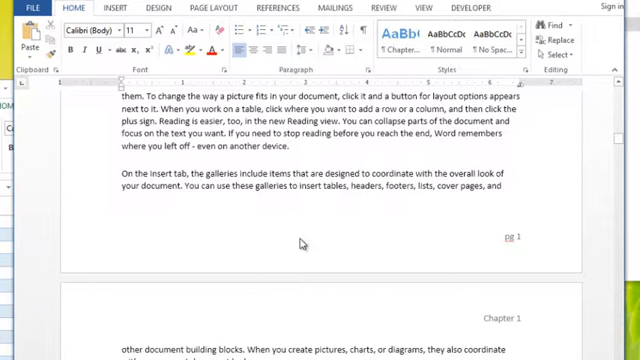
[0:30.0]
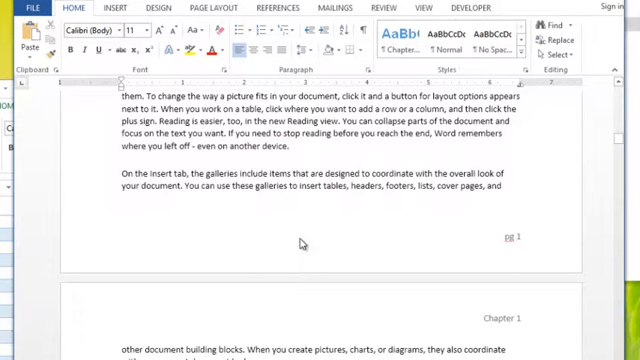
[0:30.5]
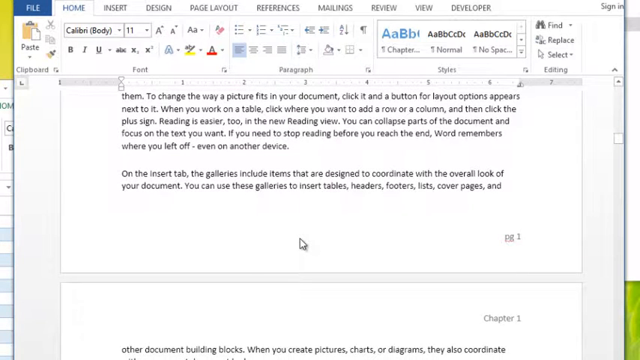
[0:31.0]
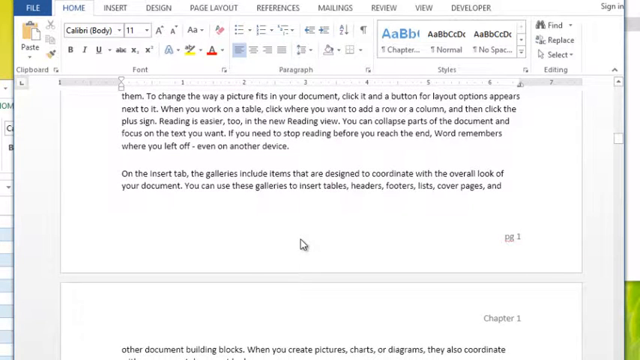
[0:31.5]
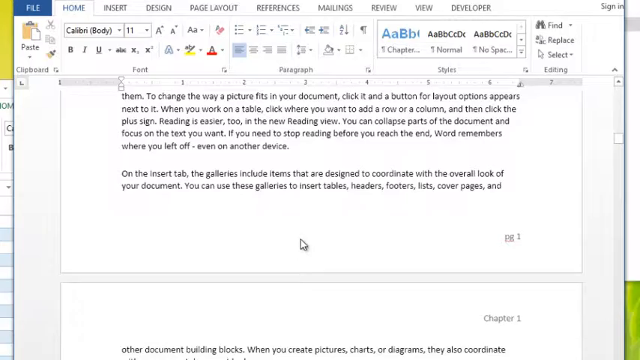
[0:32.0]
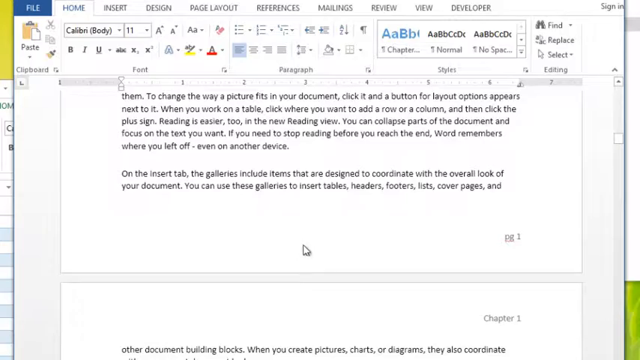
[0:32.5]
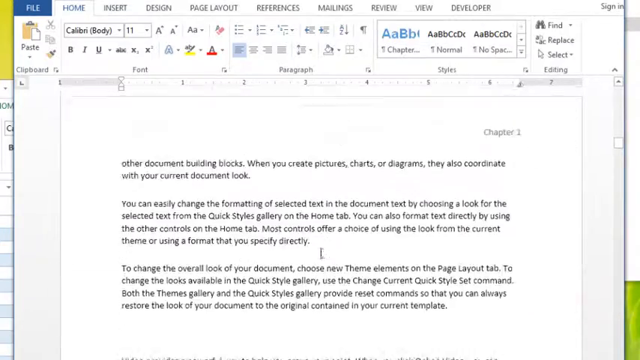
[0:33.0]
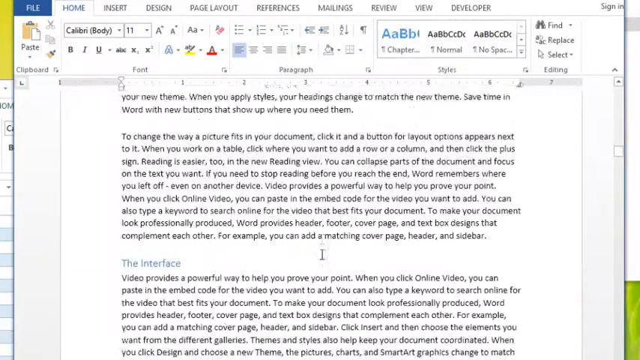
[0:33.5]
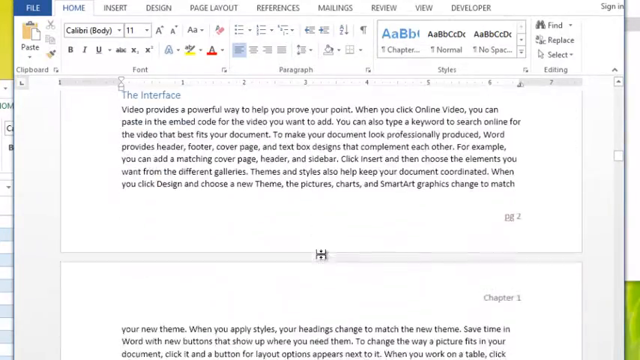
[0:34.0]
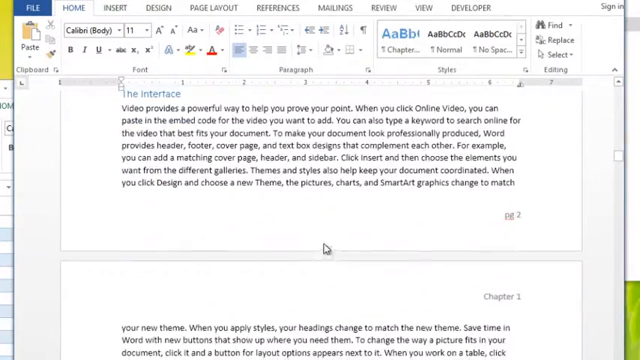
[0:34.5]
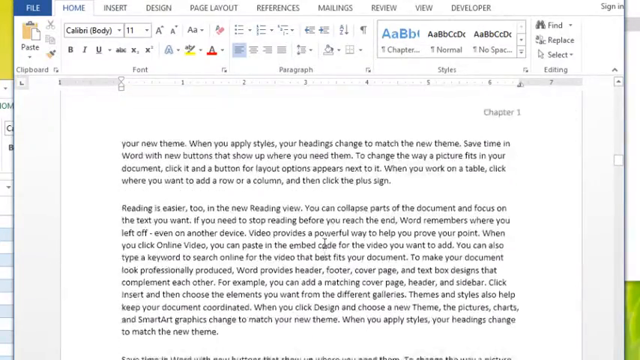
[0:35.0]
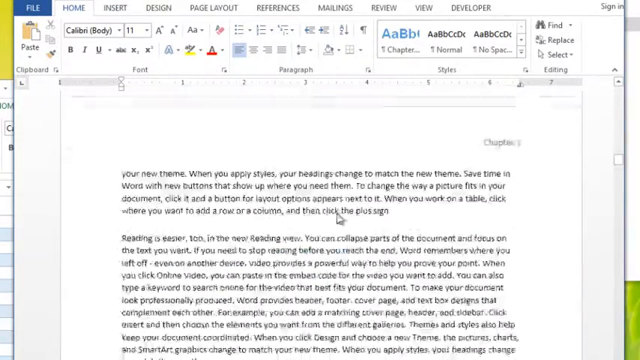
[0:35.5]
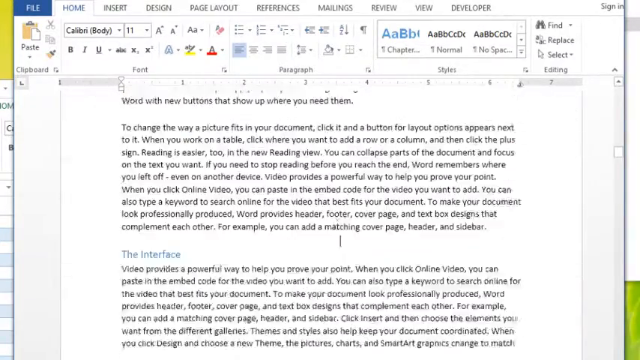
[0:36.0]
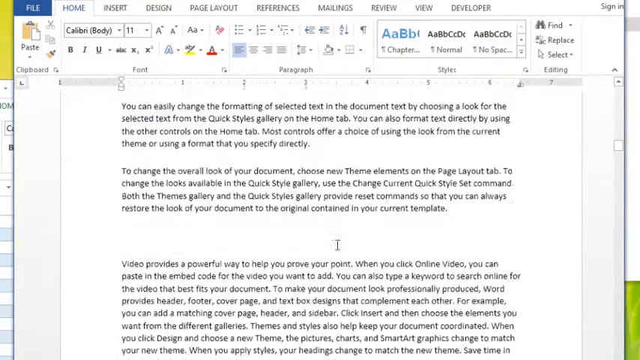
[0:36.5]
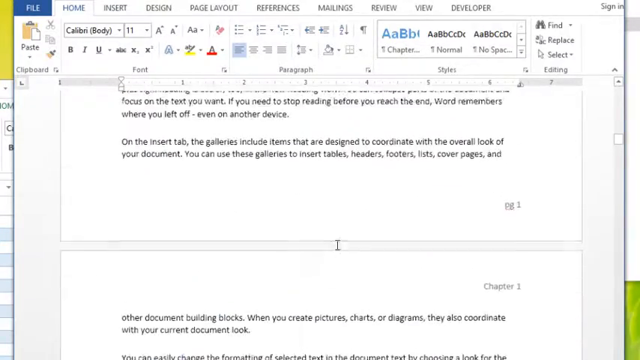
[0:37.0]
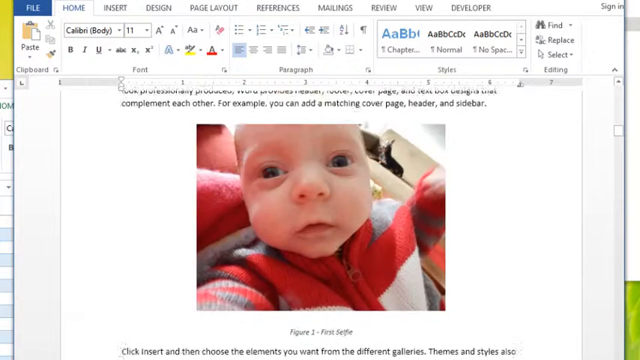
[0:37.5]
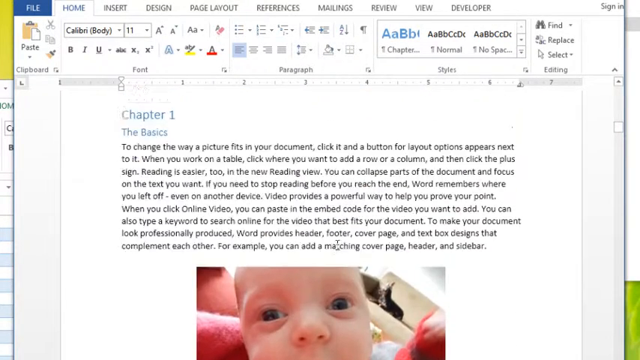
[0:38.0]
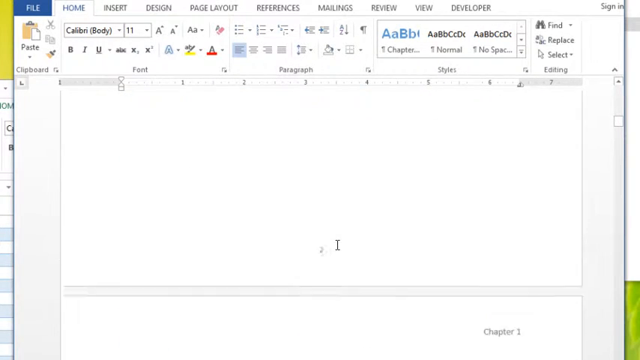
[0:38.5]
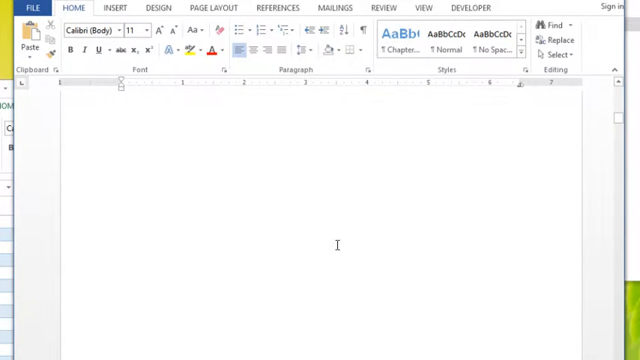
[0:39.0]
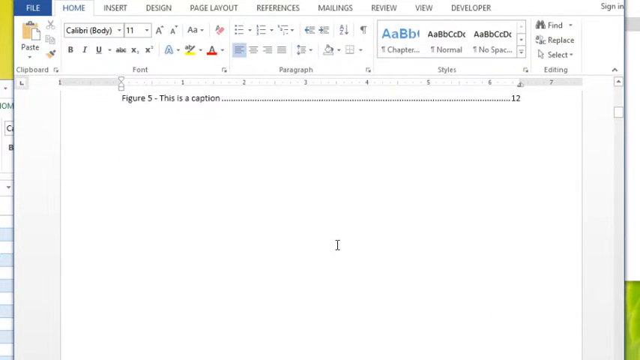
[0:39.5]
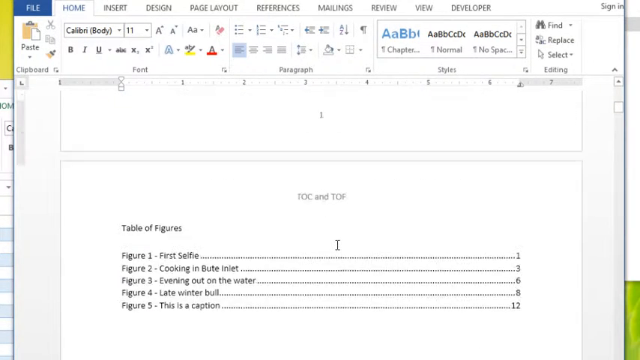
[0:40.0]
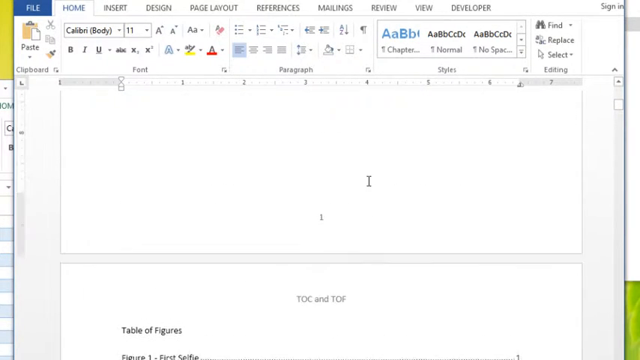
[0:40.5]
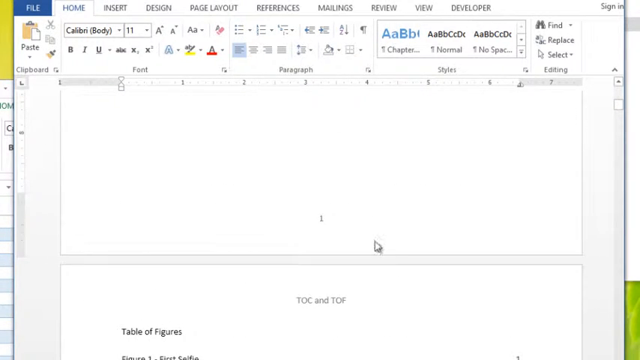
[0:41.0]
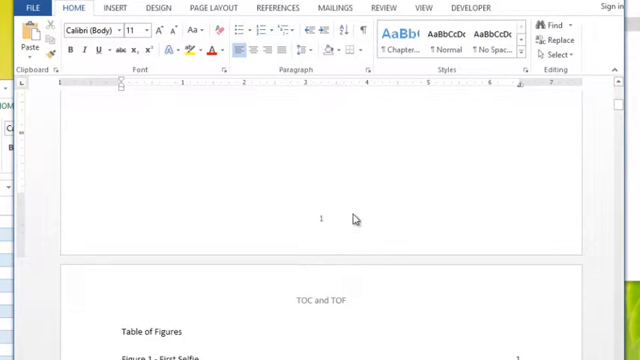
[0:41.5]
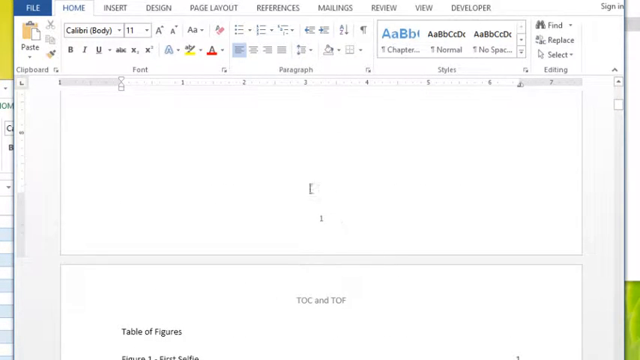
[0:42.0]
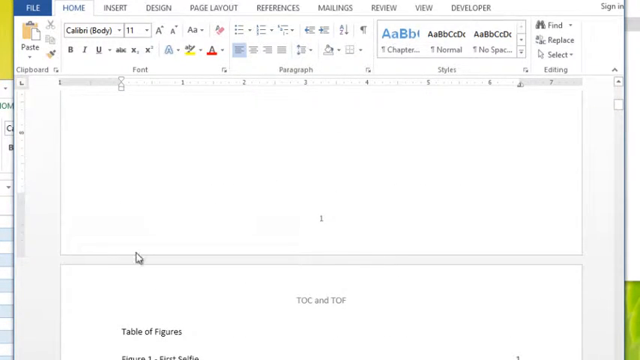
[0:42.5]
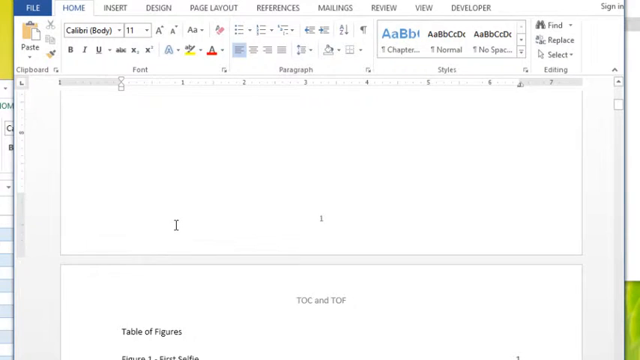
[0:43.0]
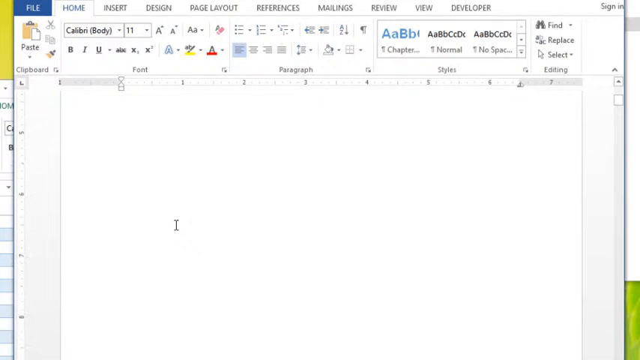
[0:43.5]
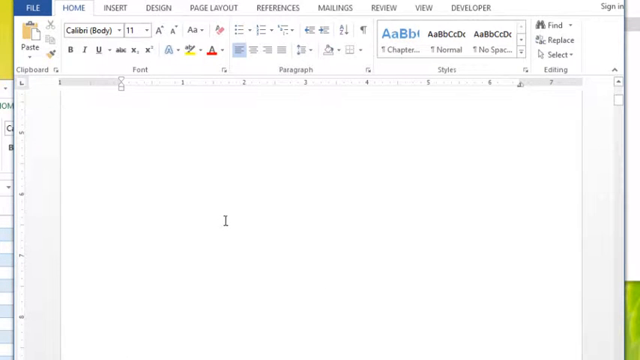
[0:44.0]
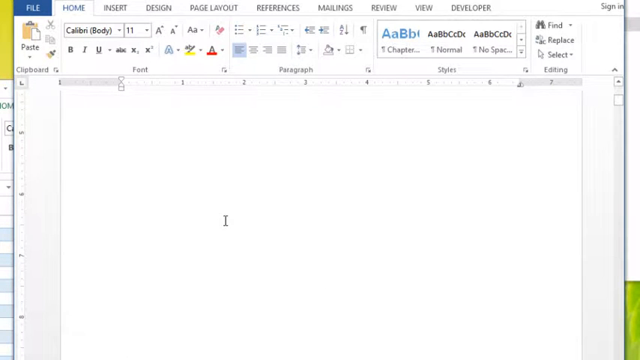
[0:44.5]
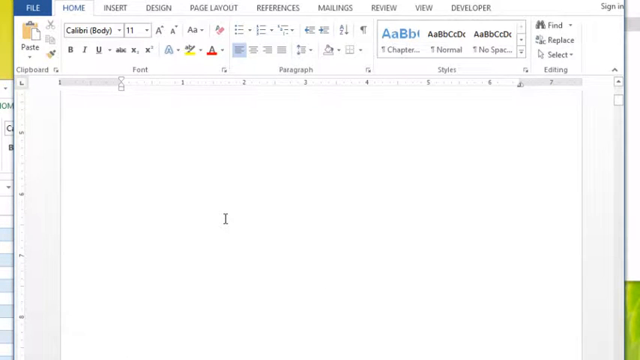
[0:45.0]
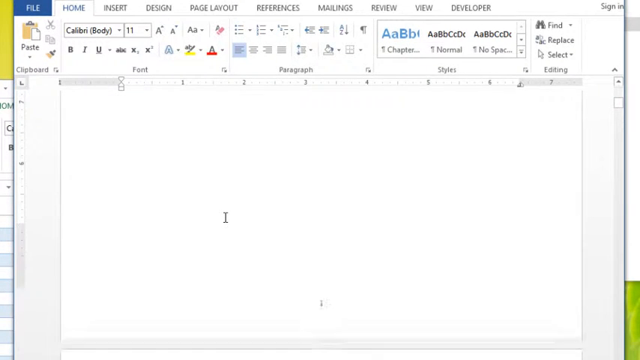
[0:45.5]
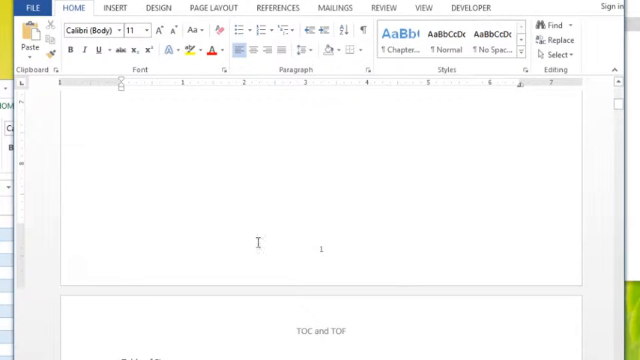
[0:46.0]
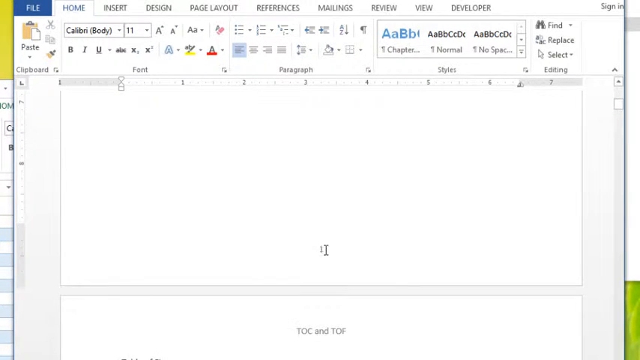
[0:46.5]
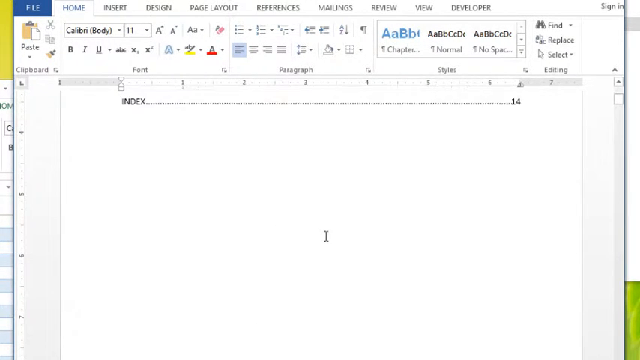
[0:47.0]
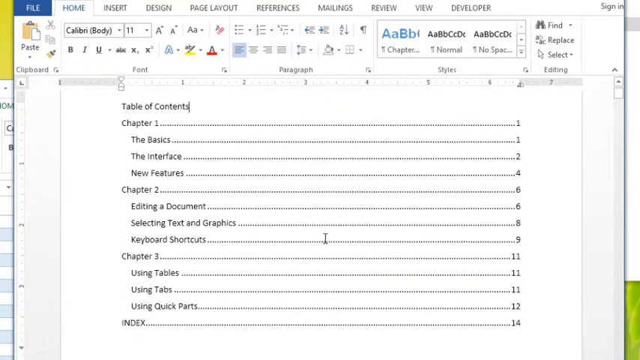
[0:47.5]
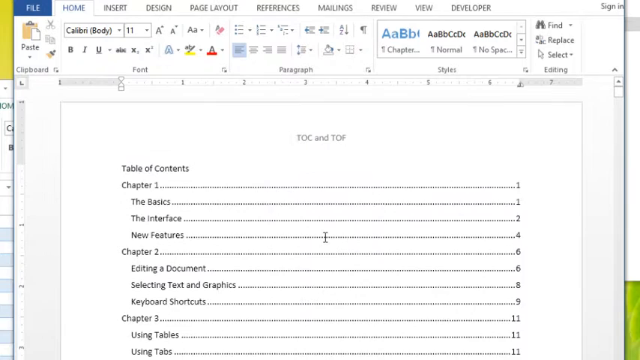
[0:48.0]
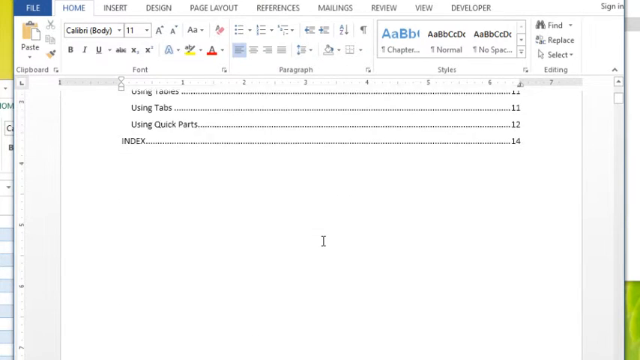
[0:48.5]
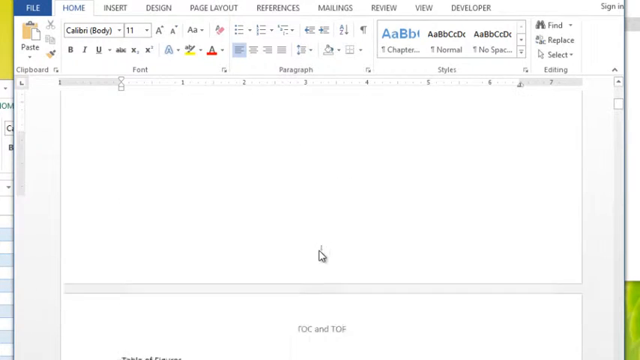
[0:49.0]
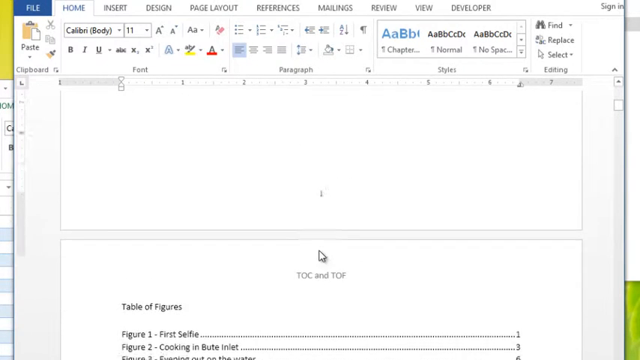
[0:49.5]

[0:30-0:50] The document scrolls up and down, showing the table of contents and chapter one along with its formatting. The cursor circles around the page numbers.